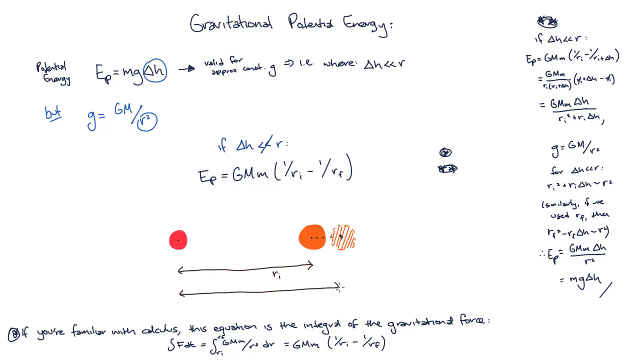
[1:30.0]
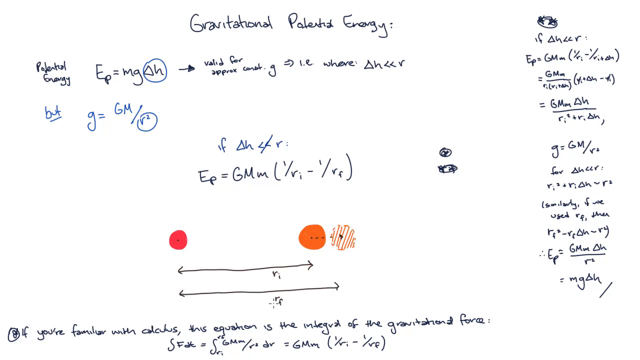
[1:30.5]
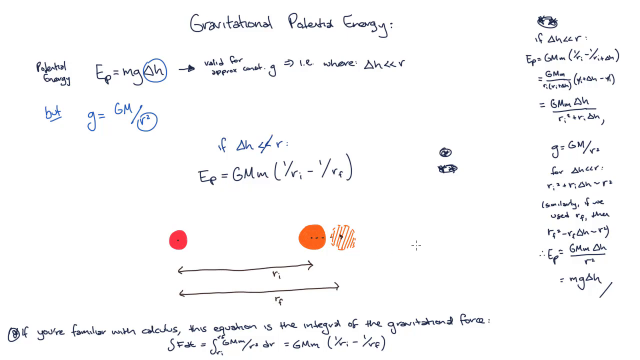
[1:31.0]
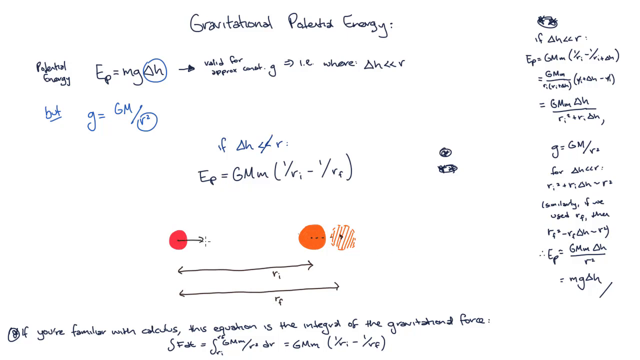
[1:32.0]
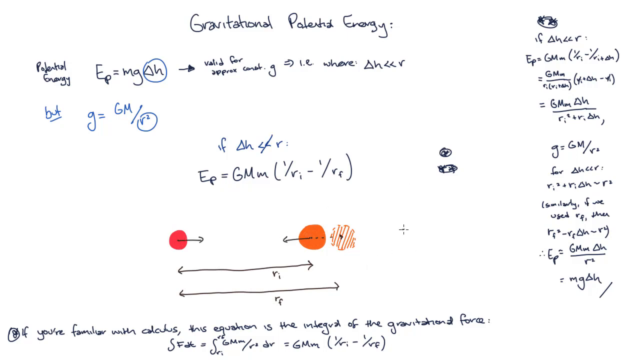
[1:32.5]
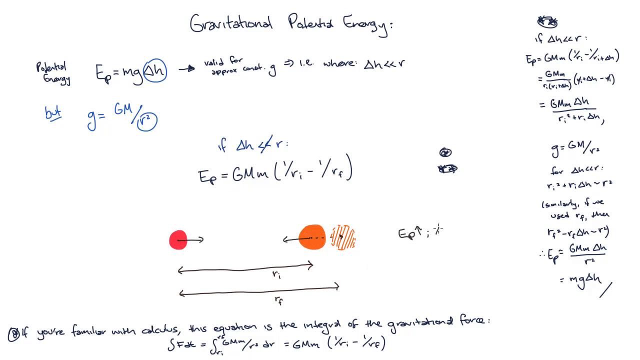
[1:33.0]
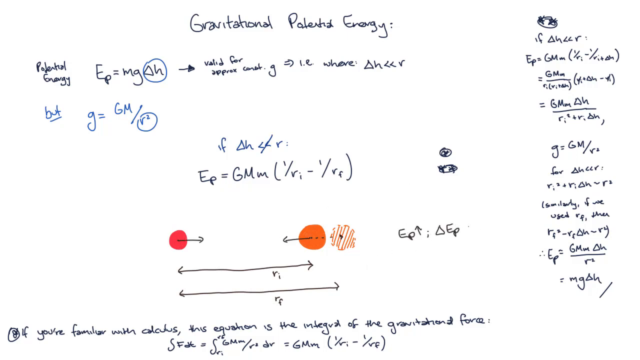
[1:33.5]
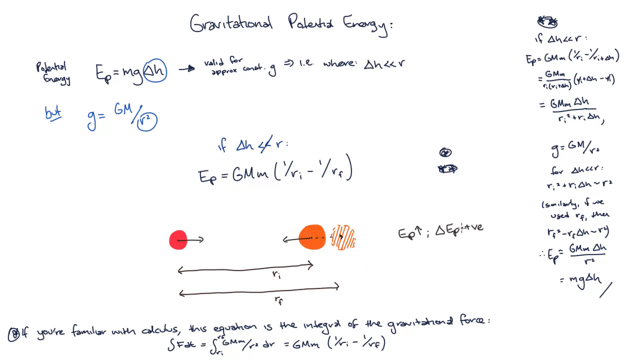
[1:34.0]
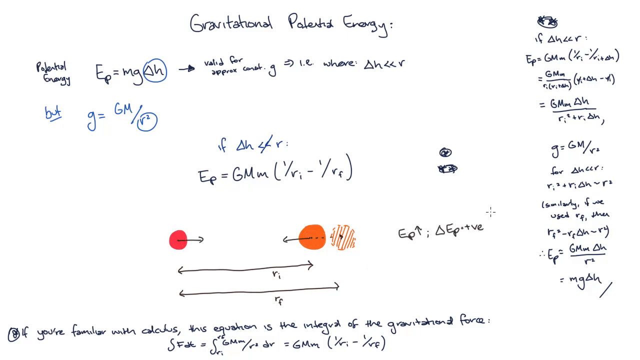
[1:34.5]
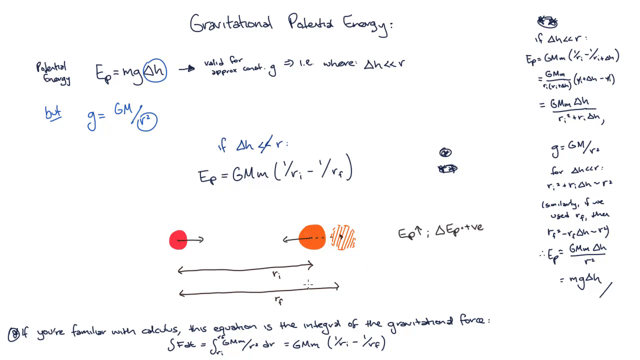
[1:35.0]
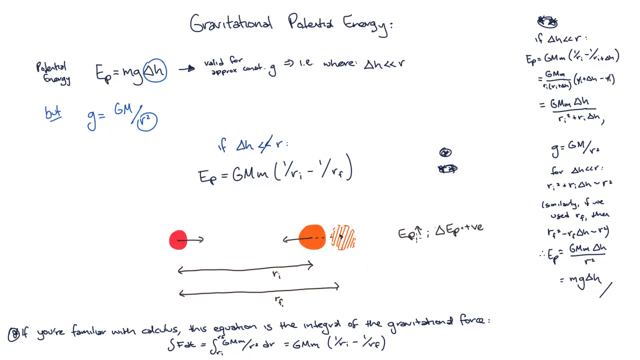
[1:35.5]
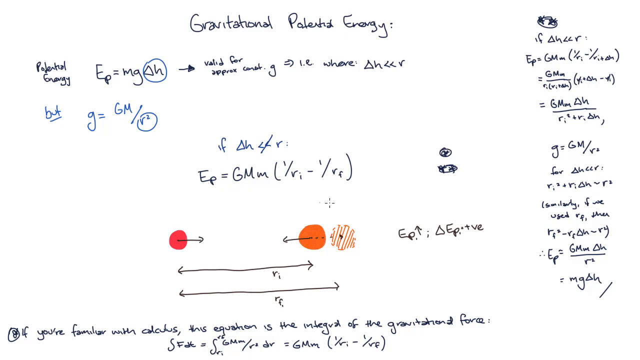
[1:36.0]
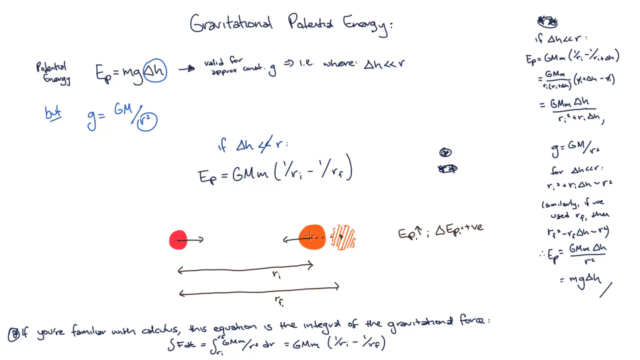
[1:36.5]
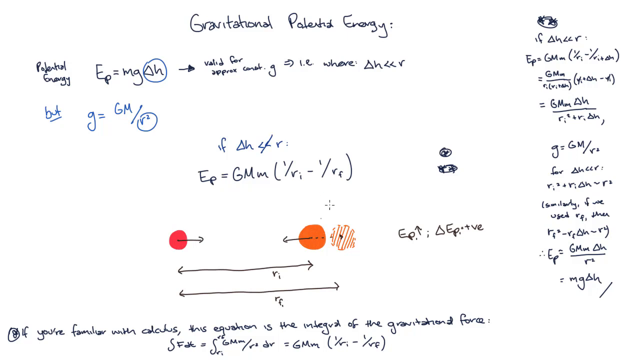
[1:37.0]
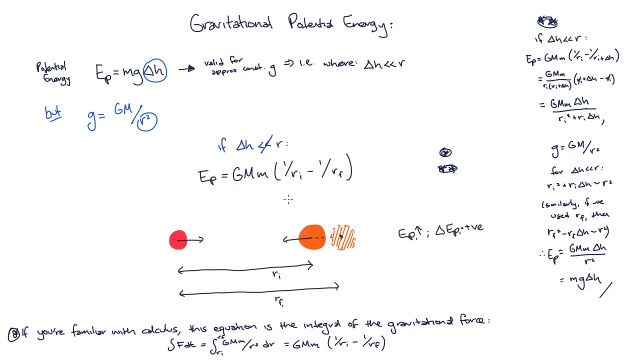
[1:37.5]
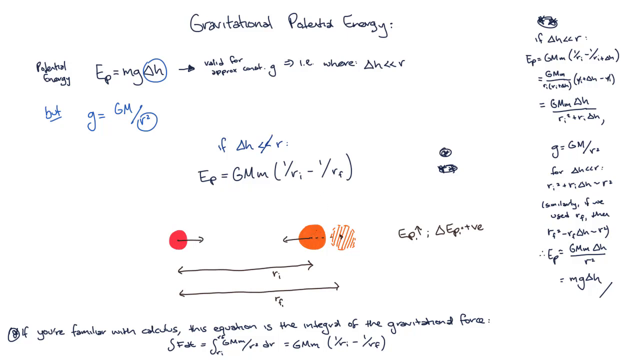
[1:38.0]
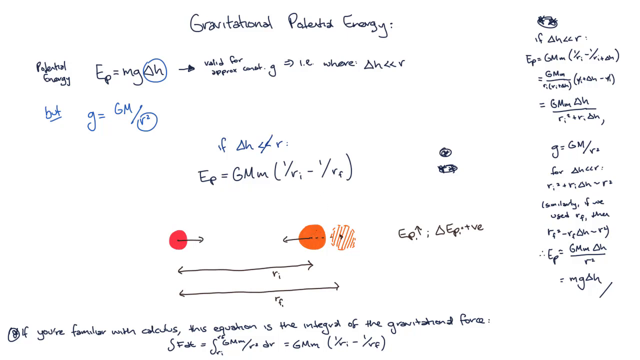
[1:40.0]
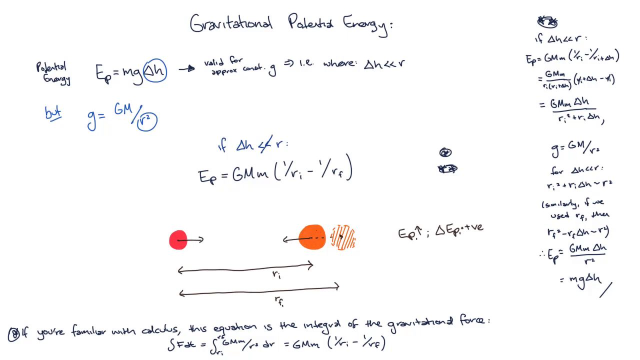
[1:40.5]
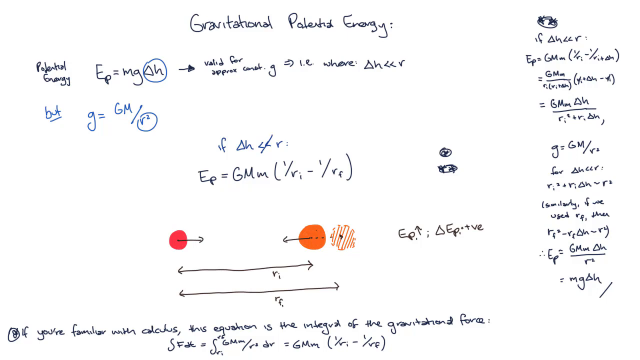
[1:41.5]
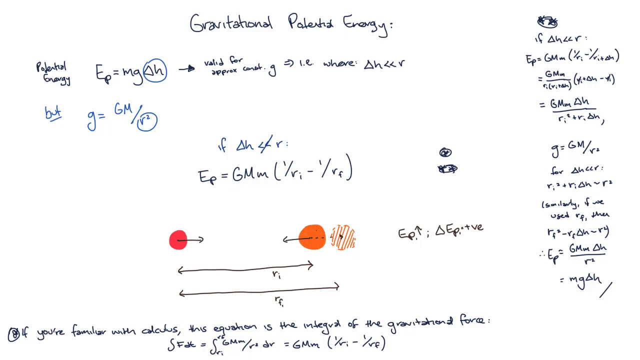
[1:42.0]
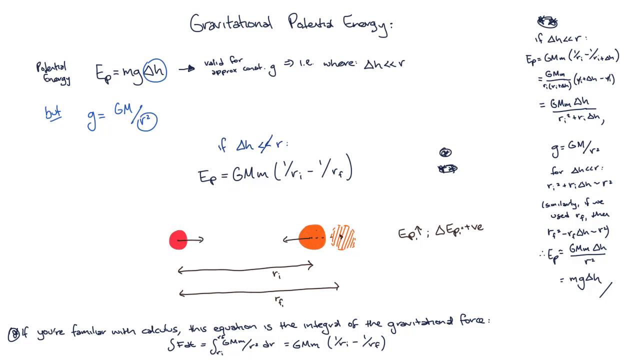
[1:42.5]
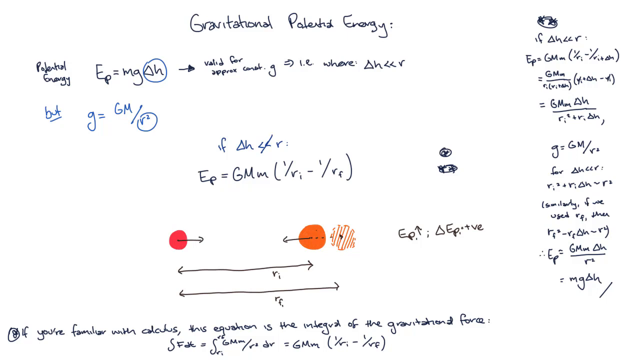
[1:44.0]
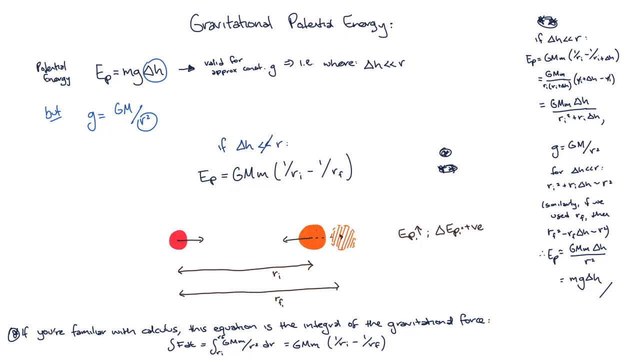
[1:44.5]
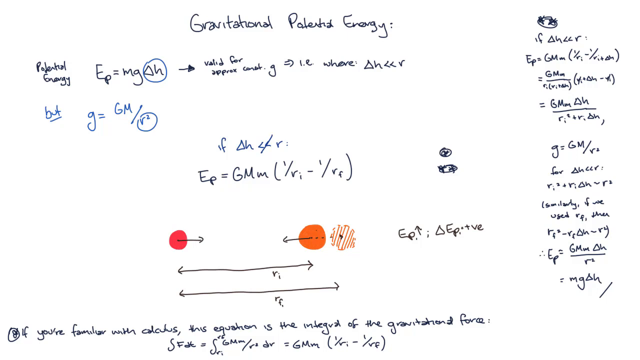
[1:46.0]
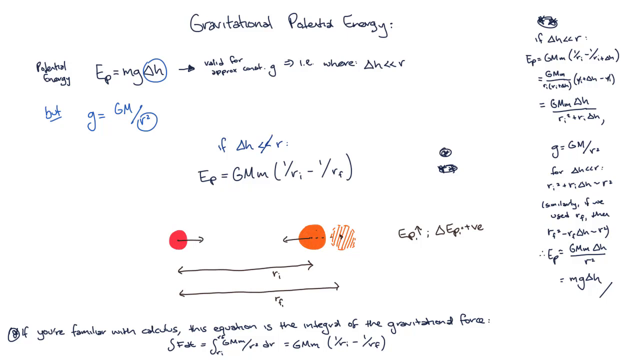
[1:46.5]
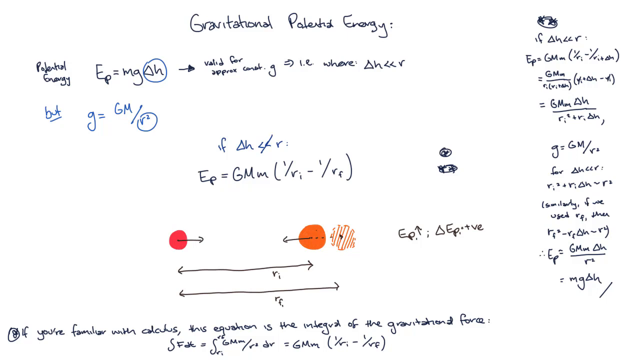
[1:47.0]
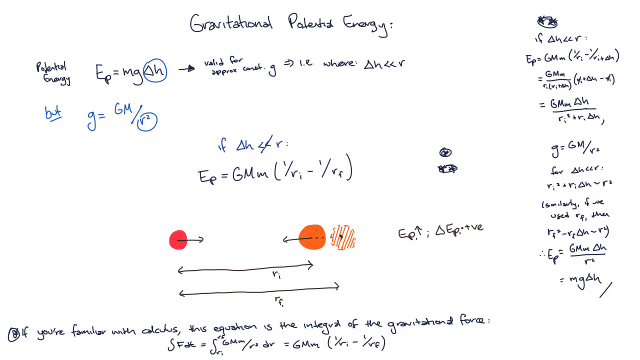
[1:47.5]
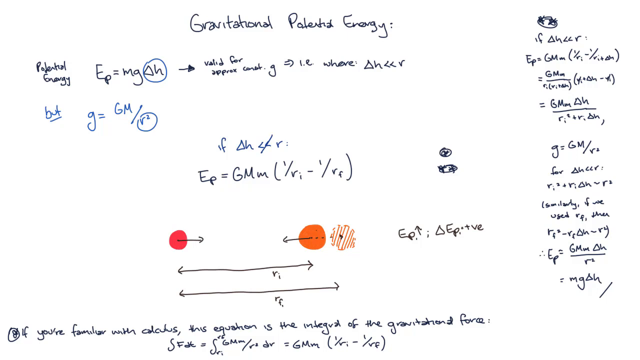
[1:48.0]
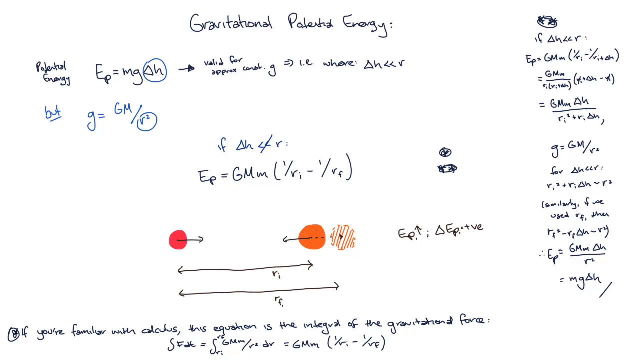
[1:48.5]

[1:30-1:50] The diagram shows that the higher an object is, the more gravitational potential energy it has, and it might be saying that position is determined by the height and mass of an object. The formula GPE = mgh is given, along with an example of lifting a box and dropping it, the box falling.